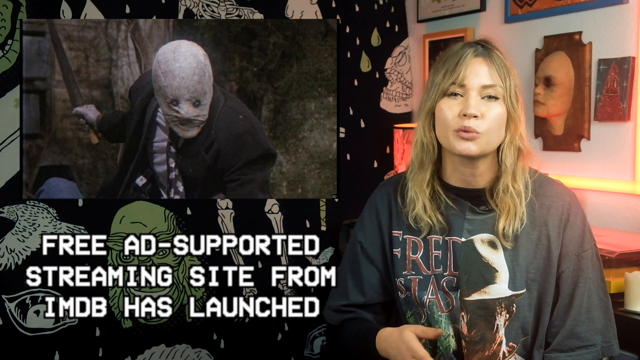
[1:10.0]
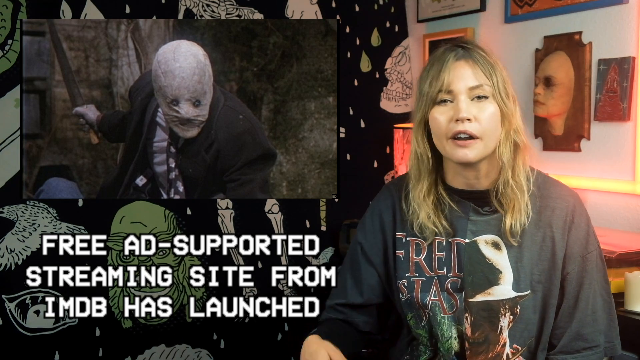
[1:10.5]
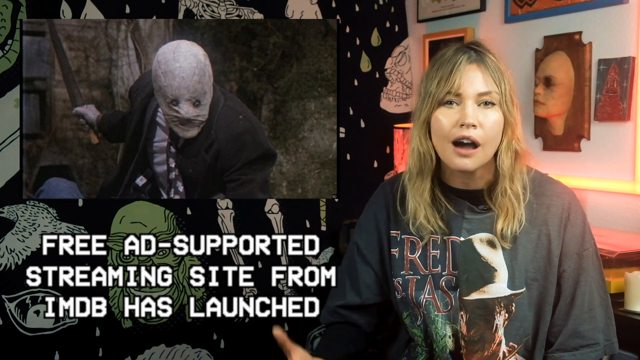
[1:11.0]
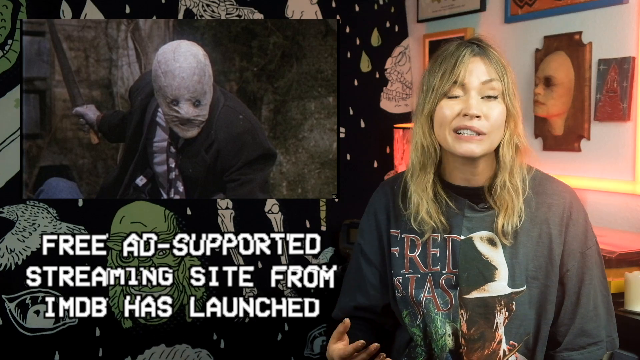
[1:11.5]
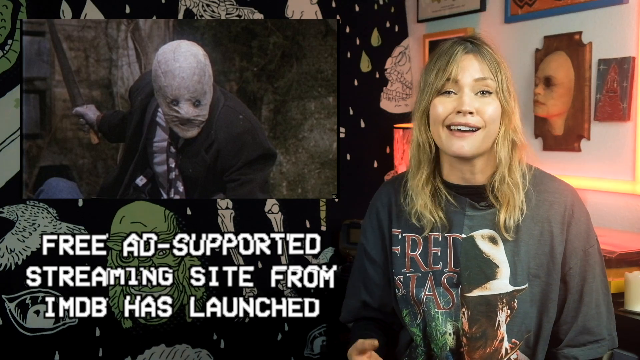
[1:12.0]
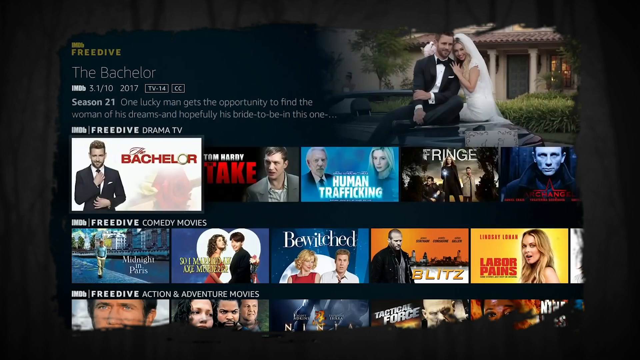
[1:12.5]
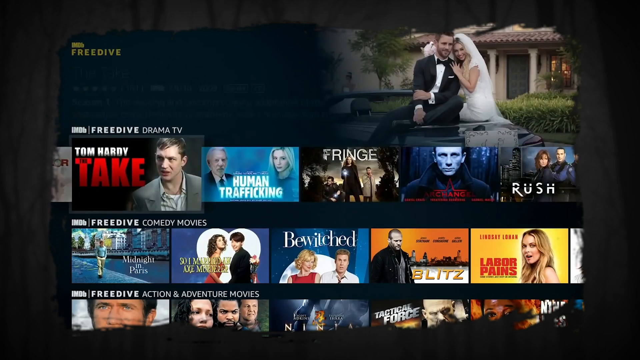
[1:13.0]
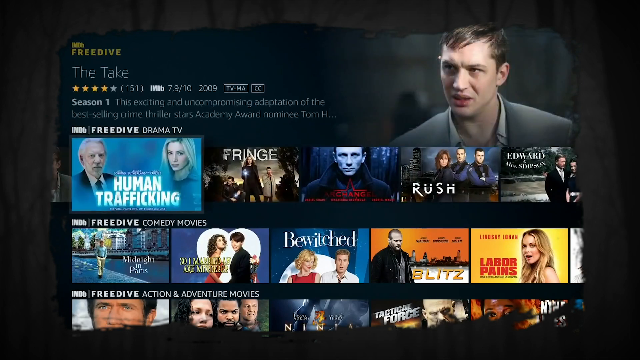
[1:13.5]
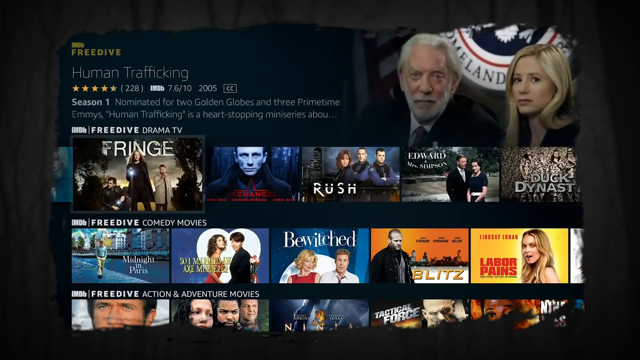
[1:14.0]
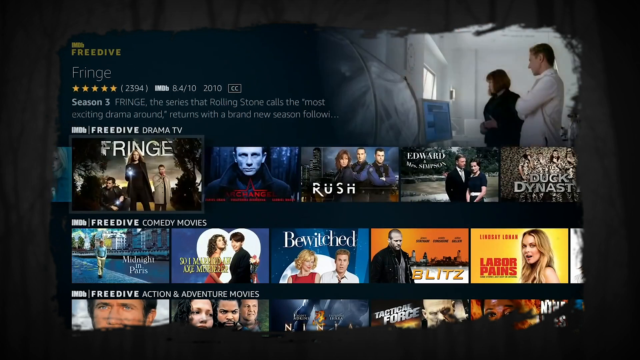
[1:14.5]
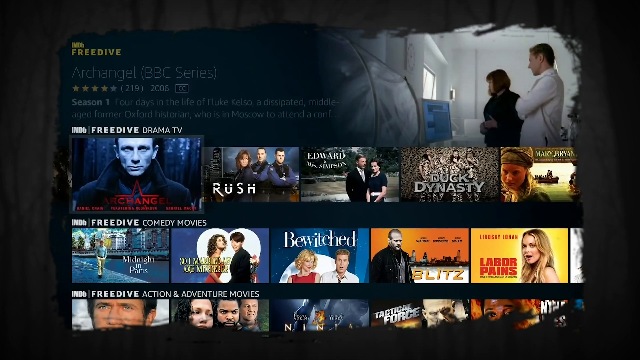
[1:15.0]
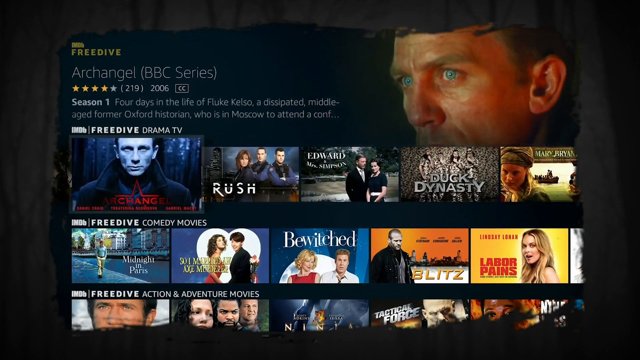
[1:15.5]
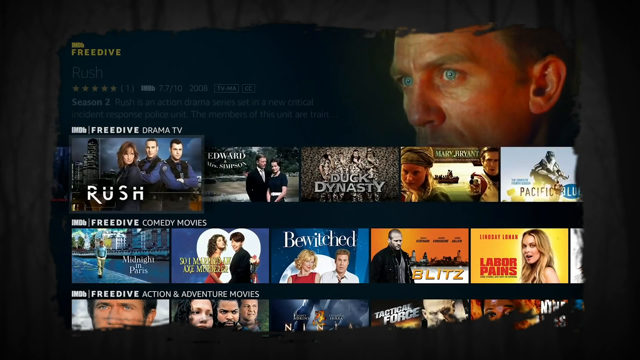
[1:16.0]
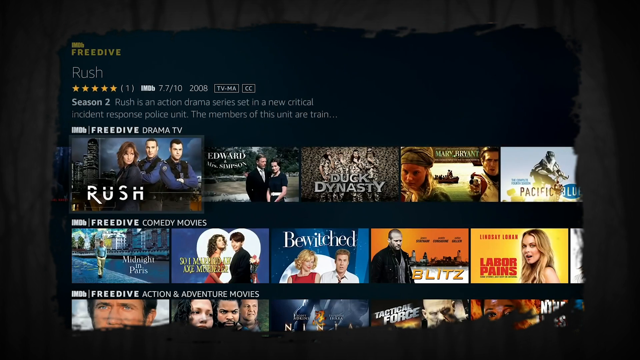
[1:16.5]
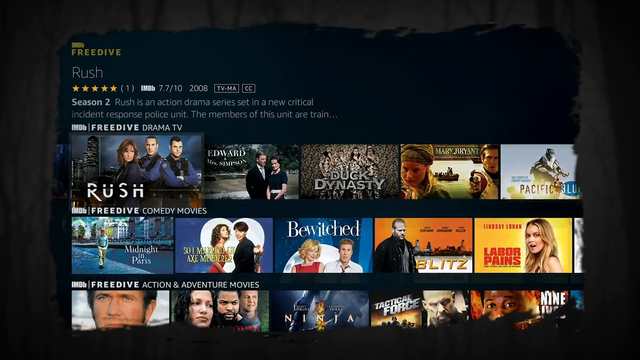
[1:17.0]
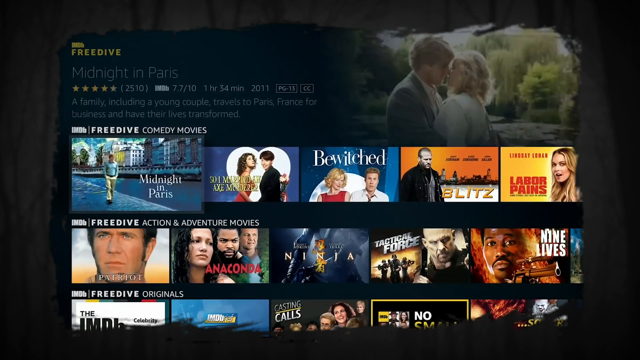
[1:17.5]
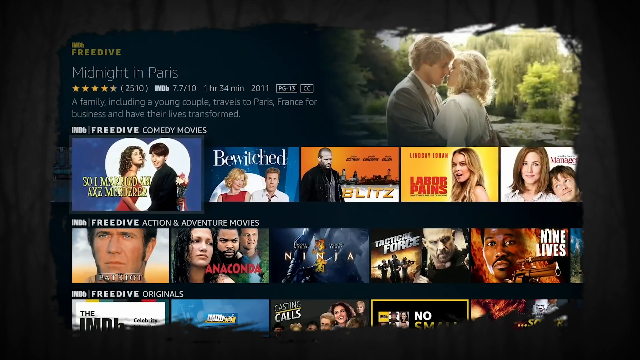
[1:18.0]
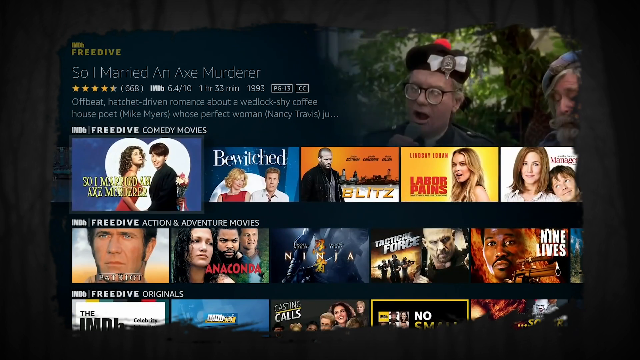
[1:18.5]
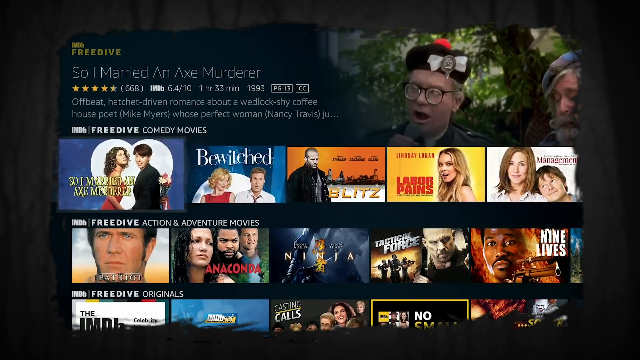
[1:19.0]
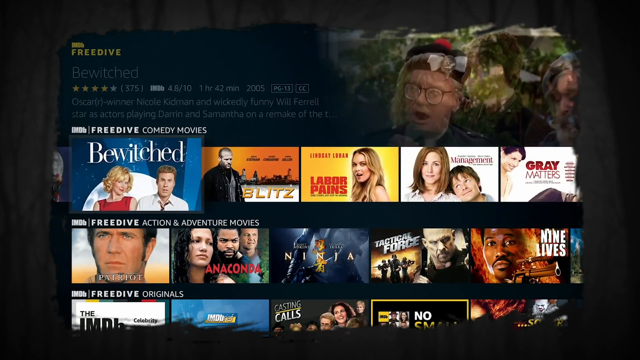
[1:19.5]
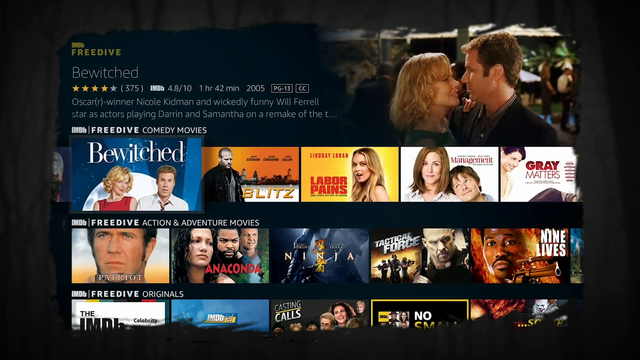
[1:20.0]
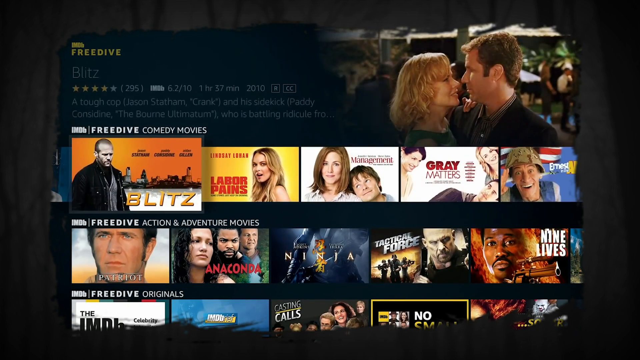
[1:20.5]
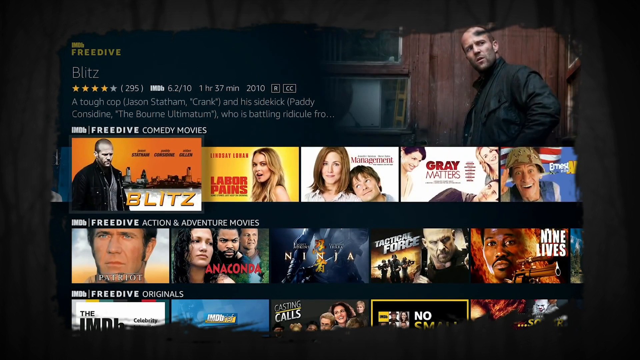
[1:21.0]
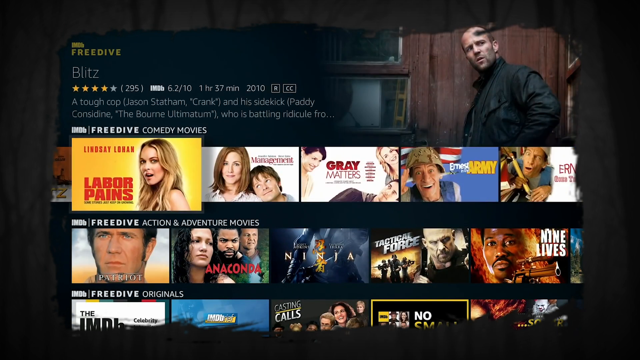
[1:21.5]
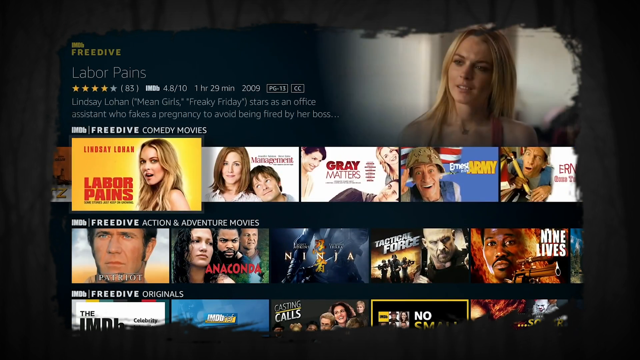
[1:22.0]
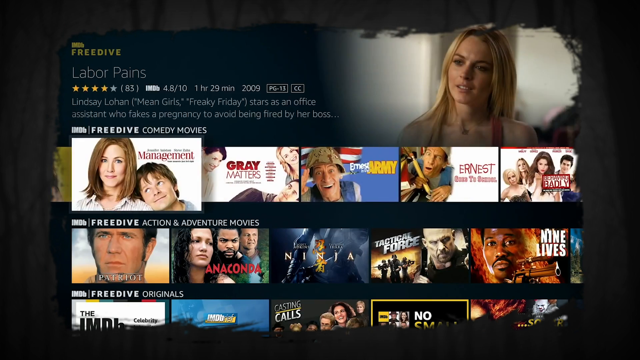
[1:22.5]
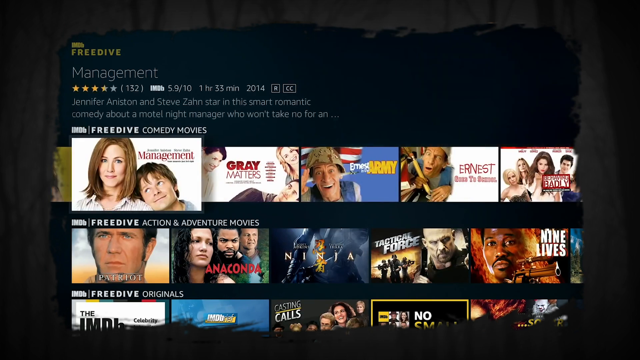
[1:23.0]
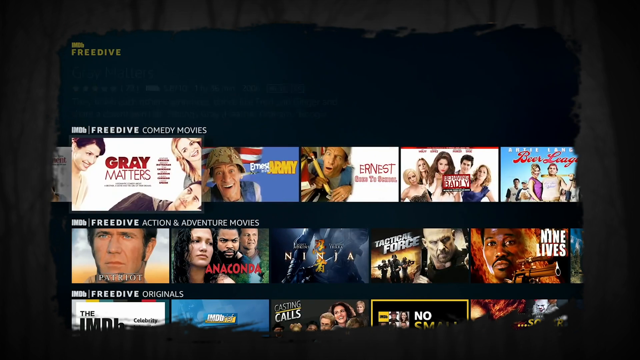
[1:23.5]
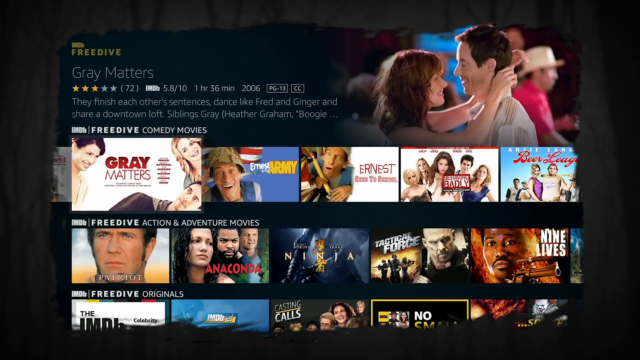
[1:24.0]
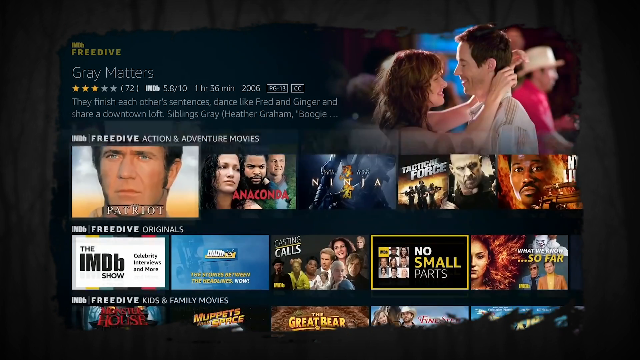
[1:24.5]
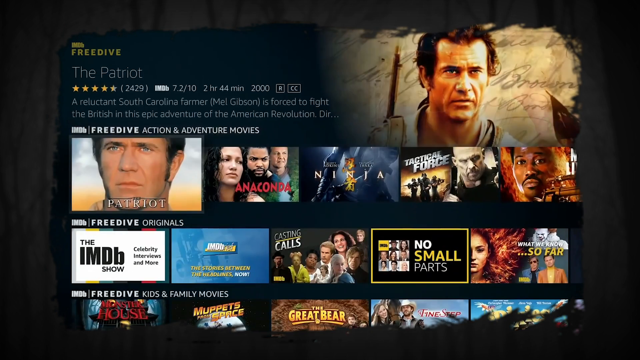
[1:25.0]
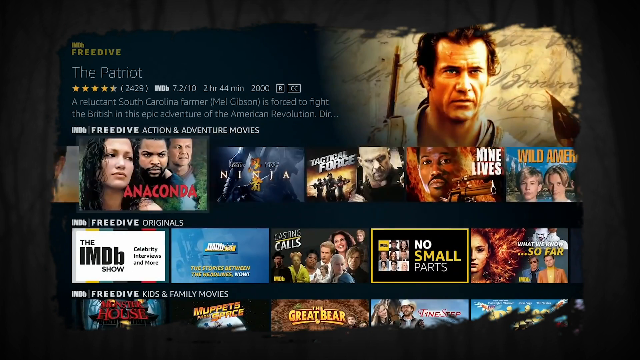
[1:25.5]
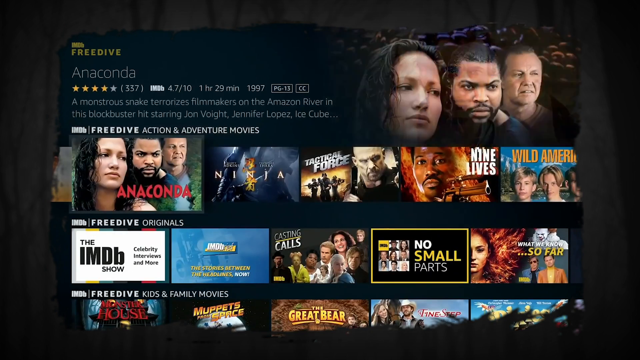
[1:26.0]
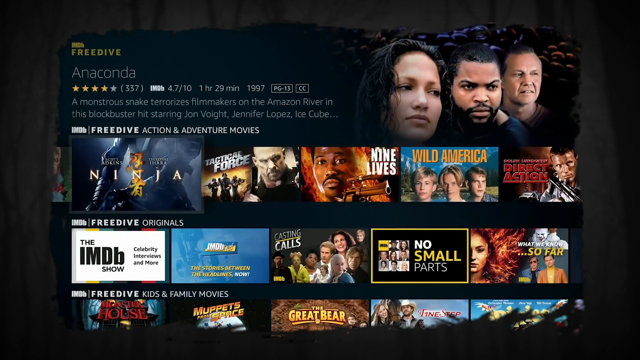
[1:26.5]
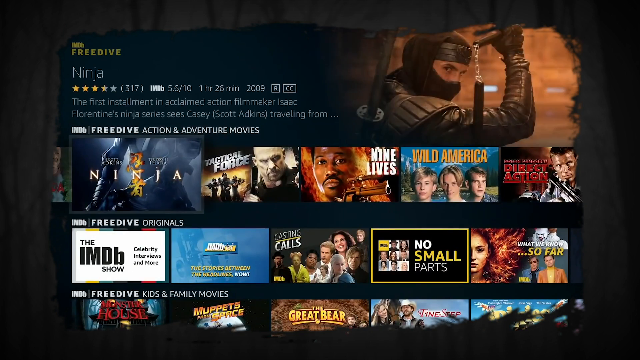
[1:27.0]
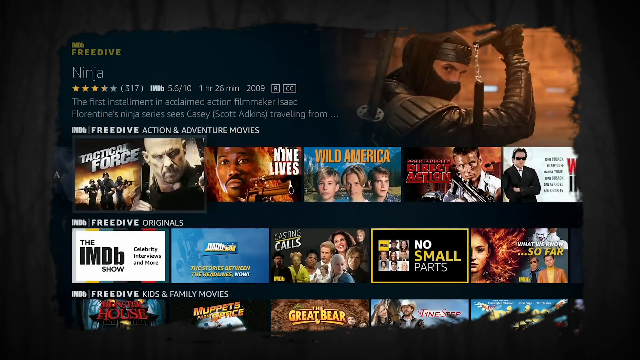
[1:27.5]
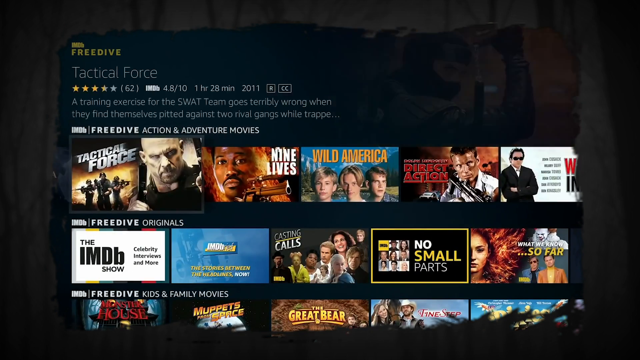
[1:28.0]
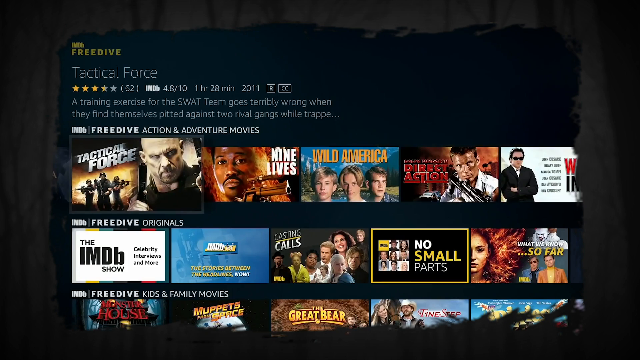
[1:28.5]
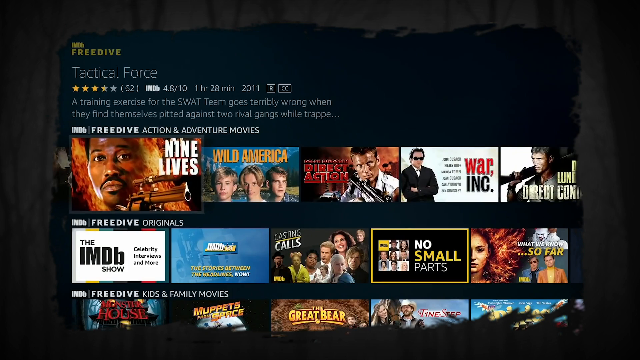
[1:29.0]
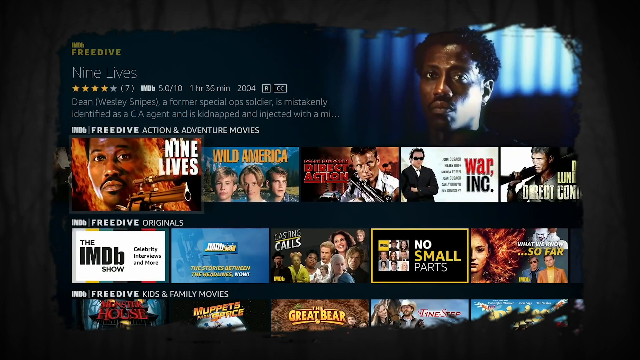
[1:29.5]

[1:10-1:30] A streaming site is opened on screen so its layout can be seen; the name at the top seems to be Free Drive. A movie called Fringe appears first, and then dozens of movies are swiped through, including "The take, the bachelor, human trafficking, fringe, a BBC series, Rush, Midnight in Paris, So I married an Axe Murderer, Bewitched, Blitz, Labor pains, Anger Management, Gray matters, The Patriot, Anaconda, Ninja, Tactical Force and Nine lives," each shown with its own colors.